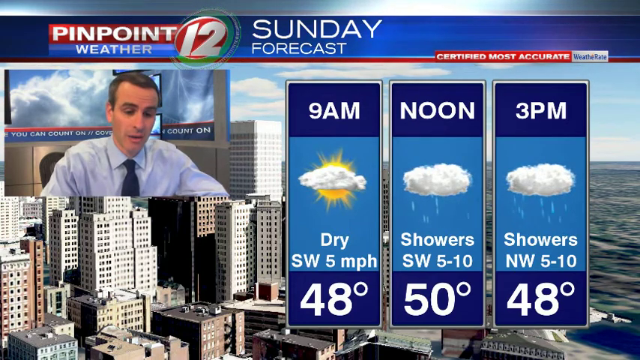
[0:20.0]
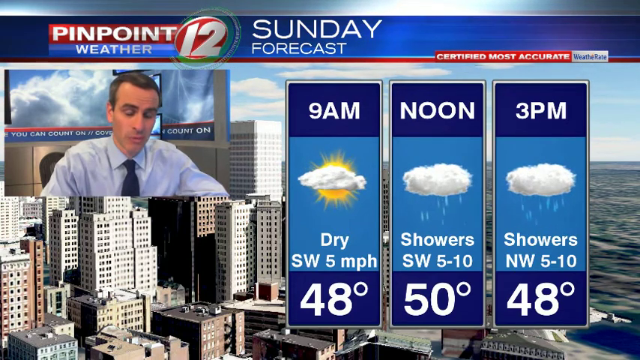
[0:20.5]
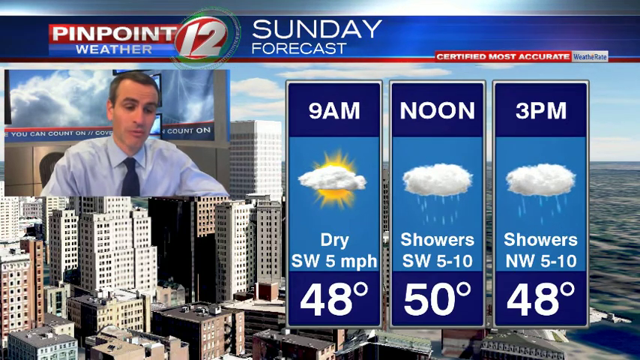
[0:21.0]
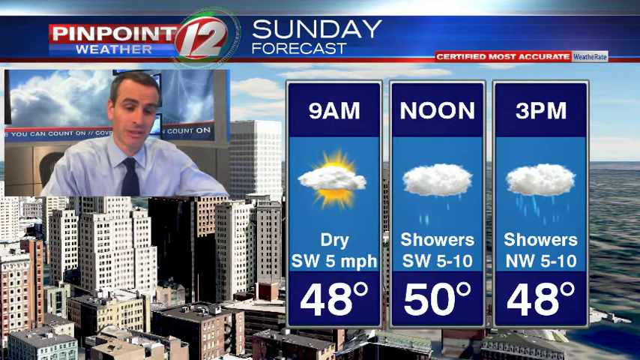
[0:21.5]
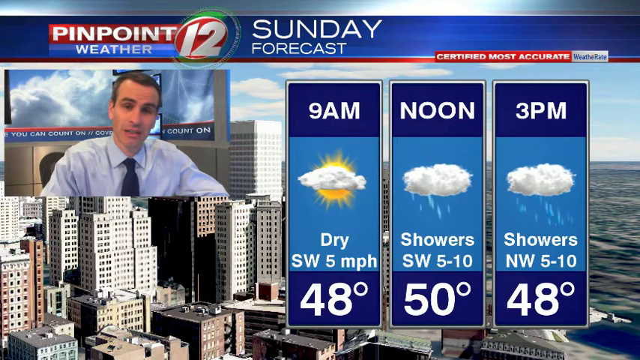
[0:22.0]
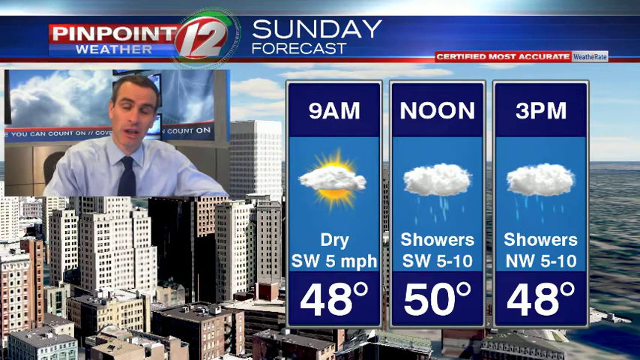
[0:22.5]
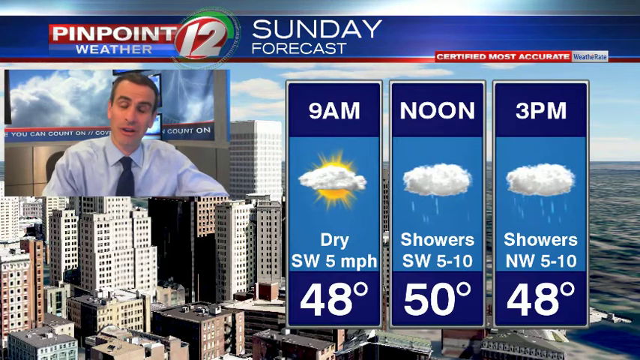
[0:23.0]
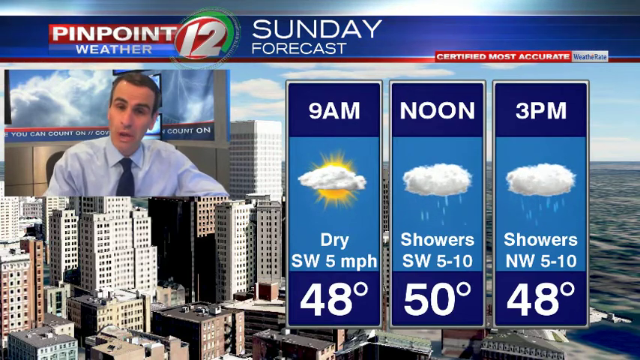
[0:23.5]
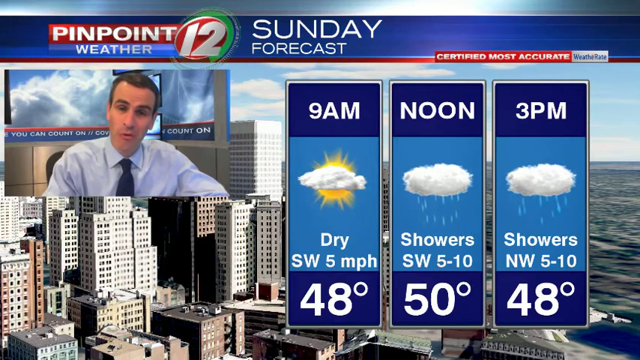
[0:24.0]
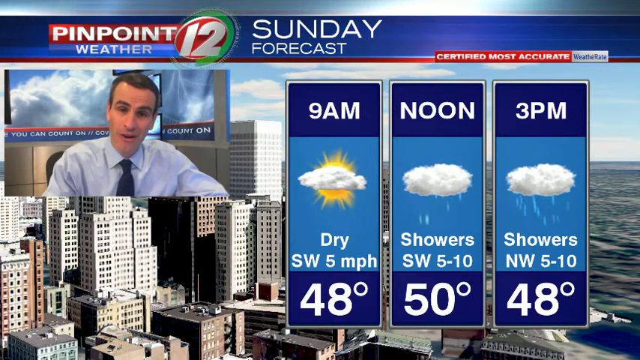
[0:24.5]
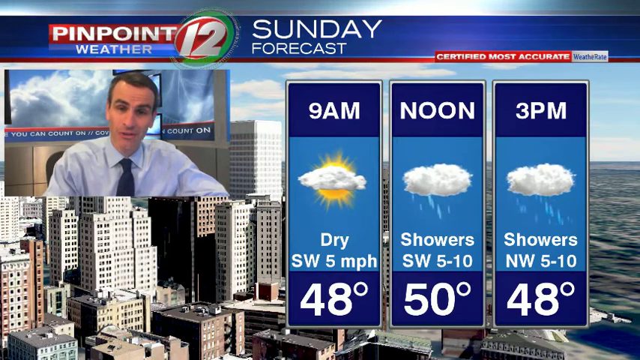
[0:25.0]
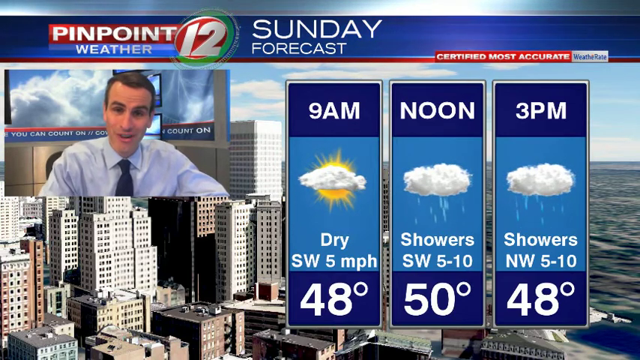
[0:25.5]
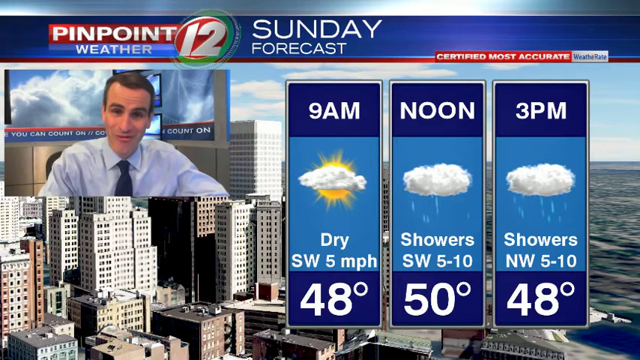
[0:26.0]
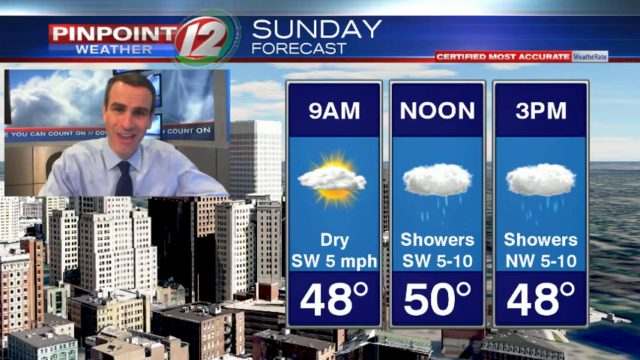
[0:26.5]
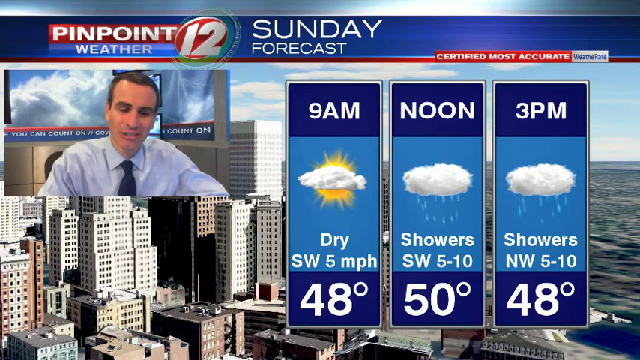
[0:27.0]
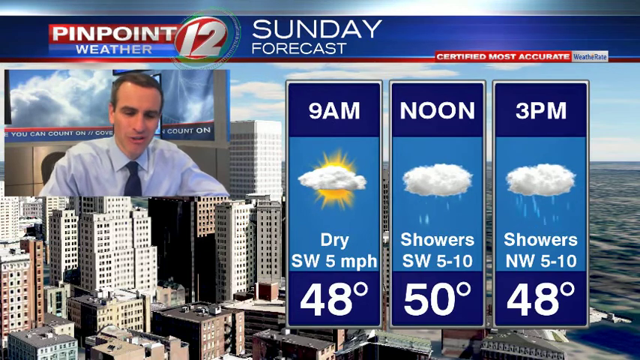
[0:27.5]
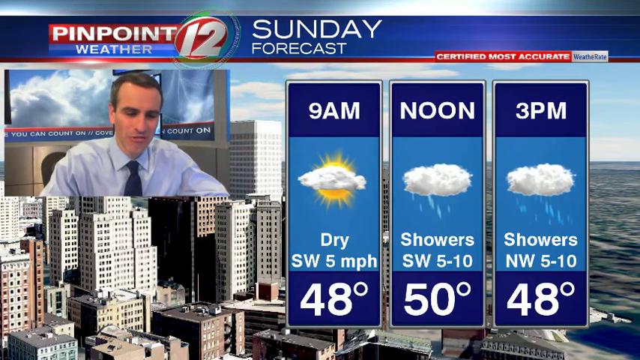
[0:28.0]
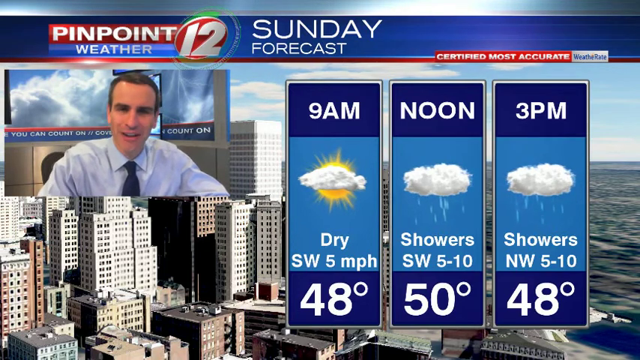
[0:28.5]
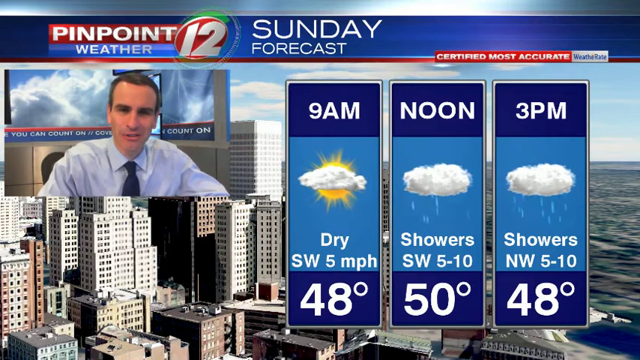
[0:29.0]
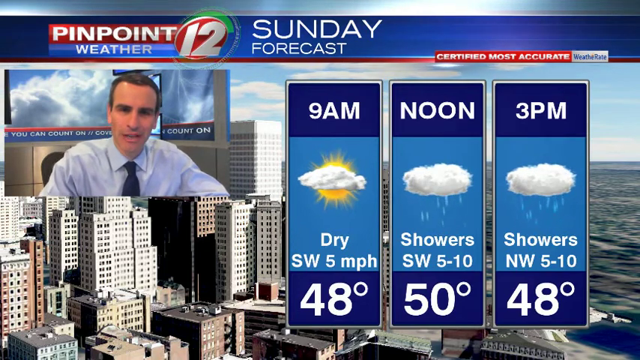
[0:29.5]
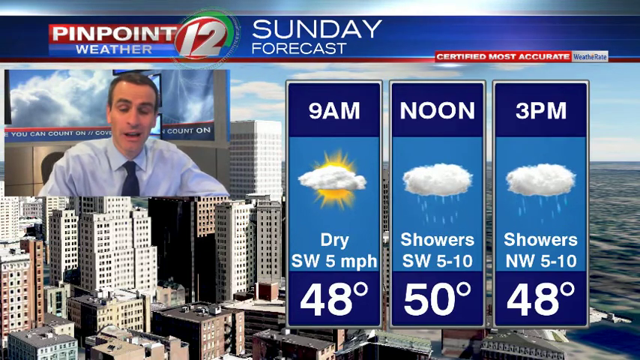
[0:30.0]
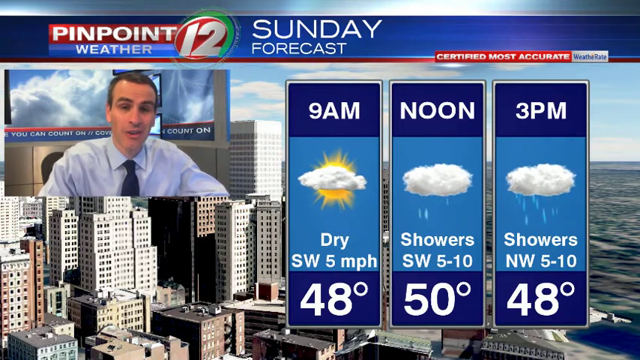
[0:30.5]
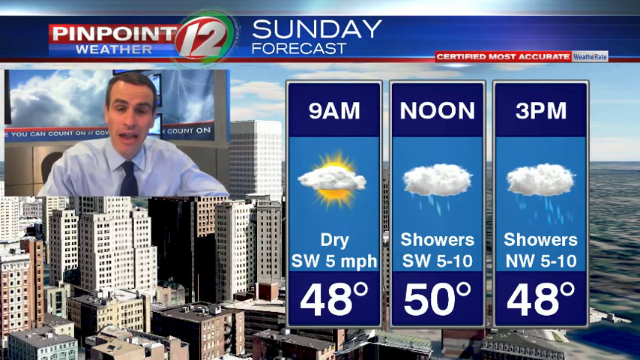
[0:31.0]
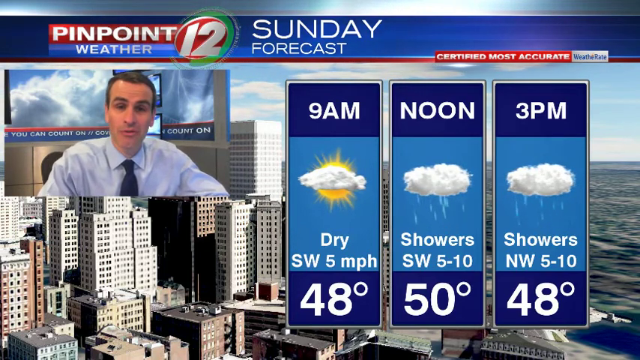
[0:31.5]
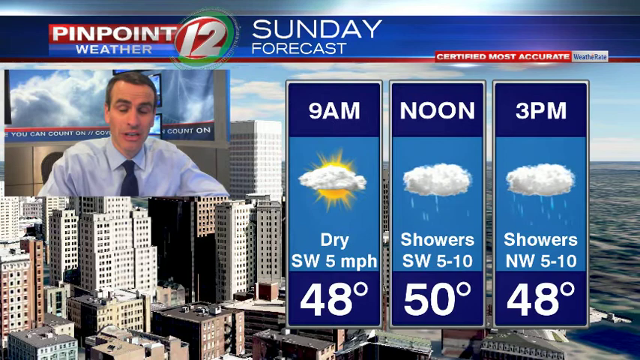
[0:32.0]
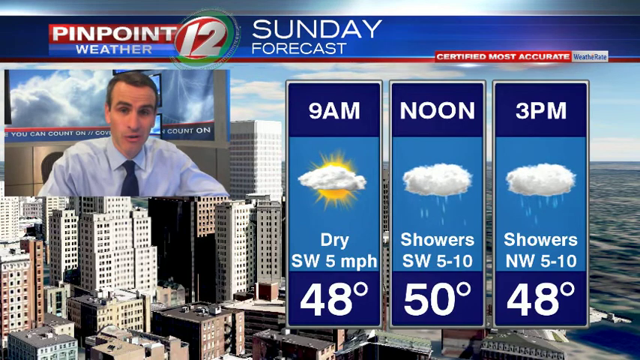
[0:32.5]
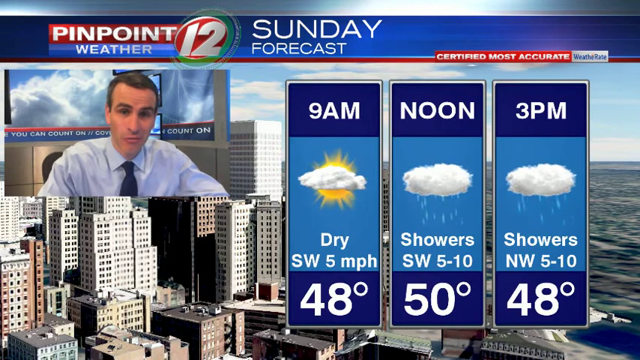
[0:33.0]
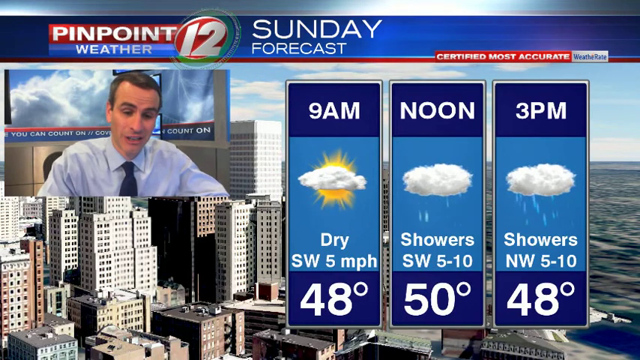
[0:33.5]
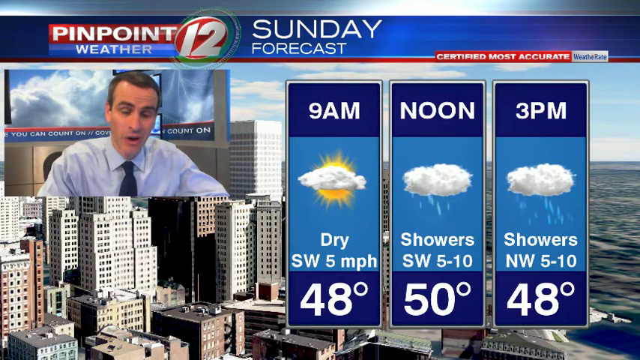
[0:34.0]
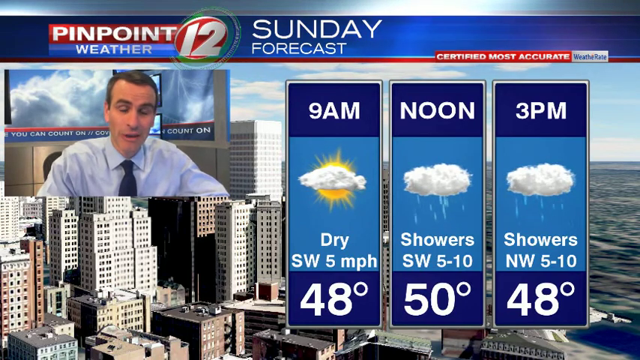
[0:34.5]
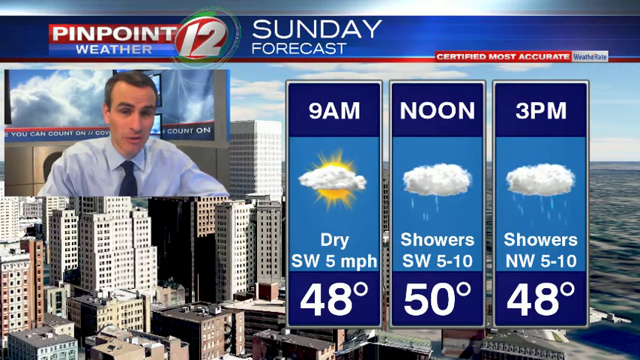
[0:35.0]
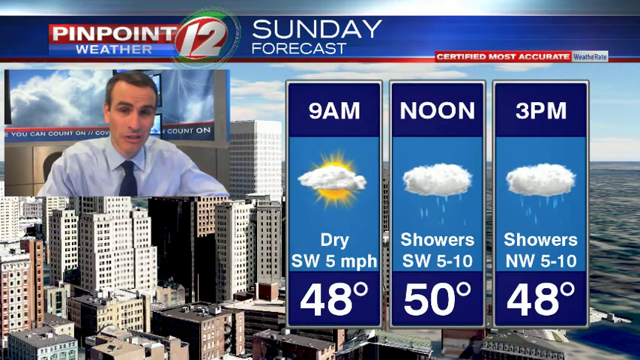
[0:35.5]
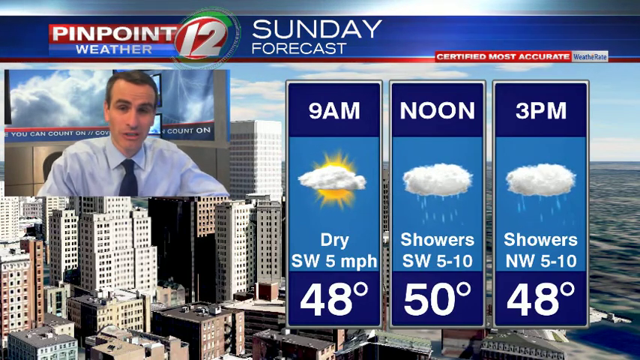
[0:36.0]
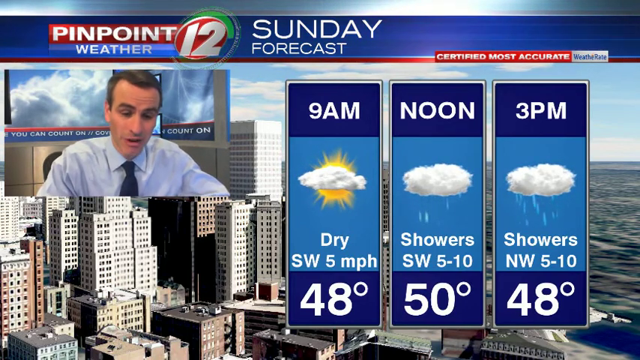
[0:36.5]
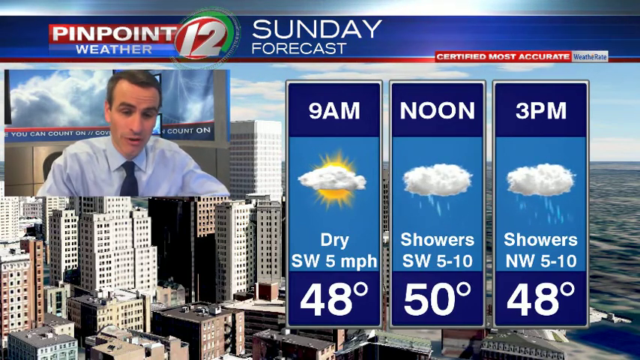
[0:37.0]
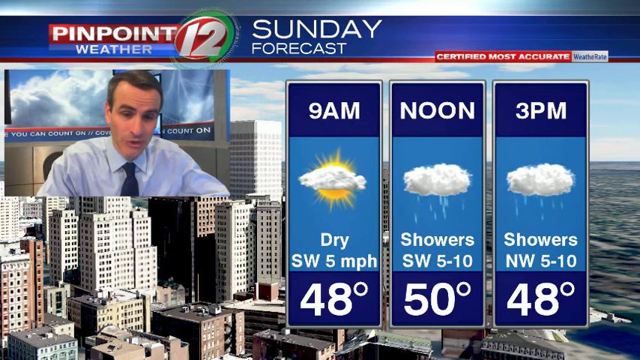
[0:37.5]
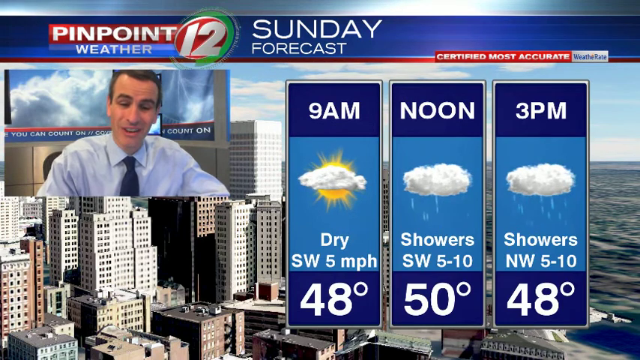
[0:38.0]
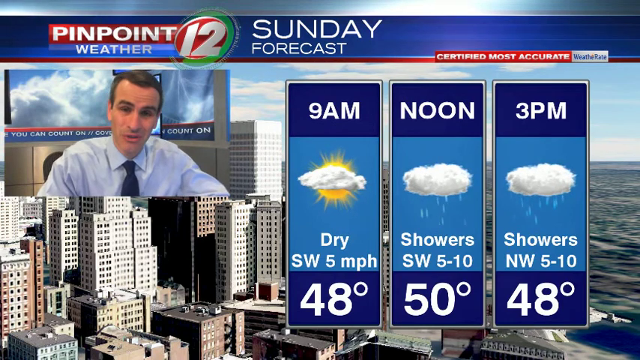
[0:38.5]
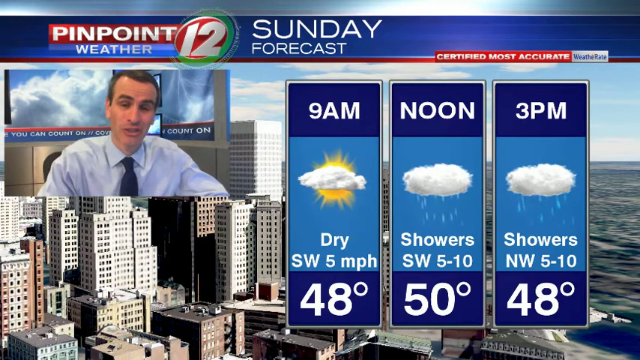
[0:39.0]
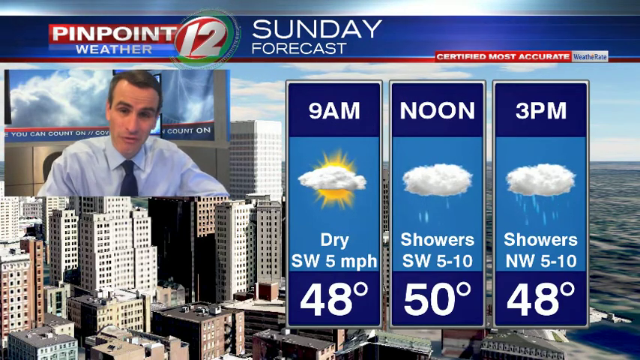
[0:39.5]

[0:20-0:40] The man on the left talks to the screen, smiling and raising his eyebrows as he speaks, very expressive. The weather forecast is still shown on the right. He is maybe explaining what is on the right of the screen: the times of day and how the weather will be, starting off with sun and turning to rain from the afternoon. He is being filmed while talking. Behind him there is a banner with a big cloud in the sky that reads "you can count on", with the rest blocked by him. The buildings behind him are some grey and others dark brown, some high and some short.